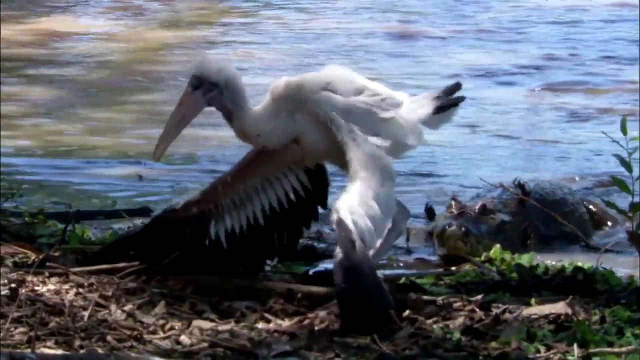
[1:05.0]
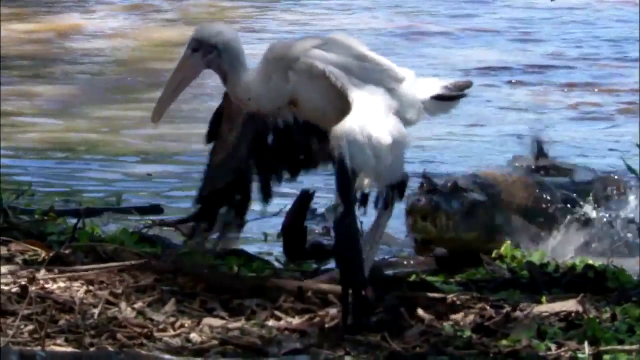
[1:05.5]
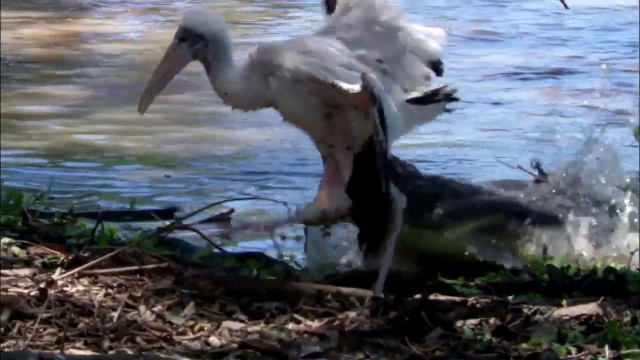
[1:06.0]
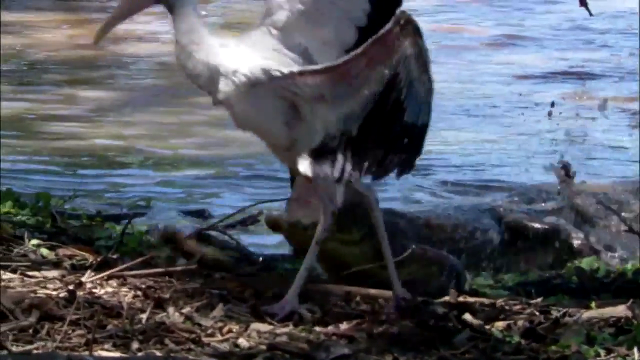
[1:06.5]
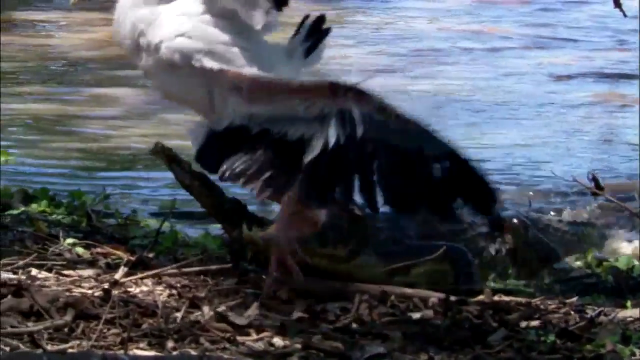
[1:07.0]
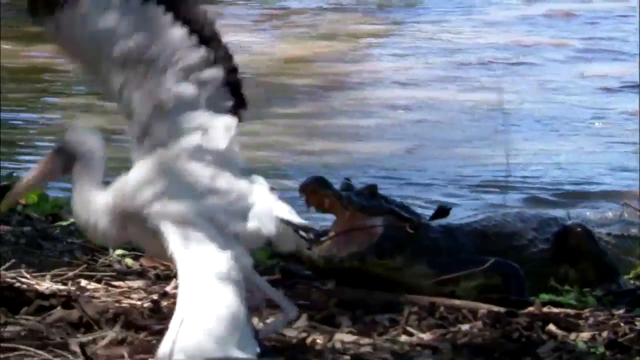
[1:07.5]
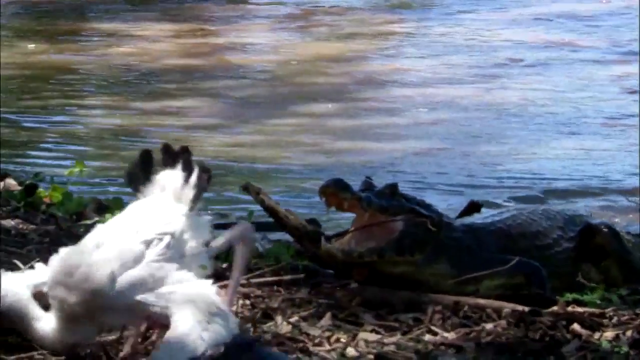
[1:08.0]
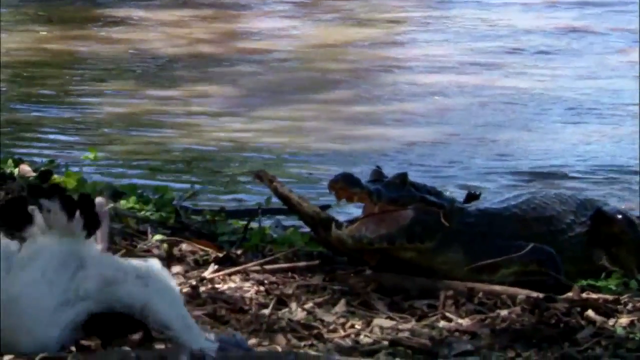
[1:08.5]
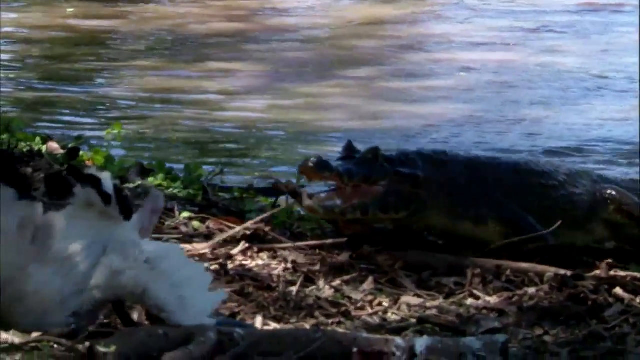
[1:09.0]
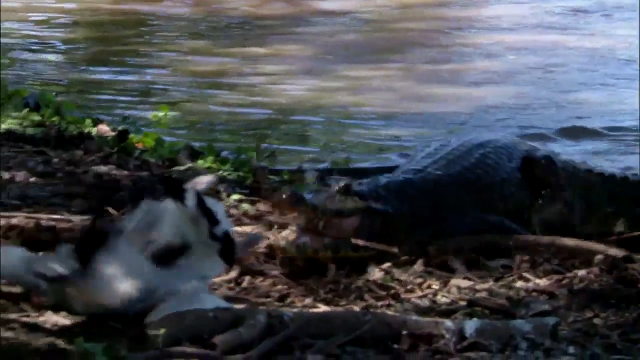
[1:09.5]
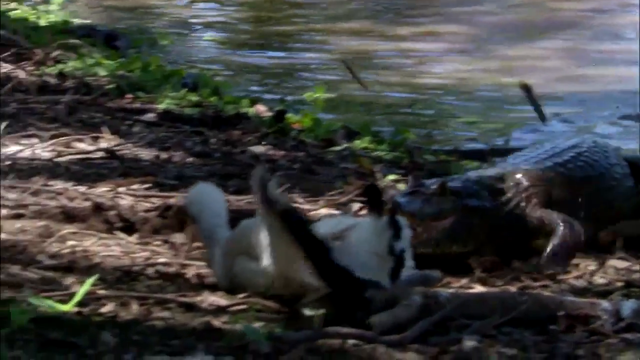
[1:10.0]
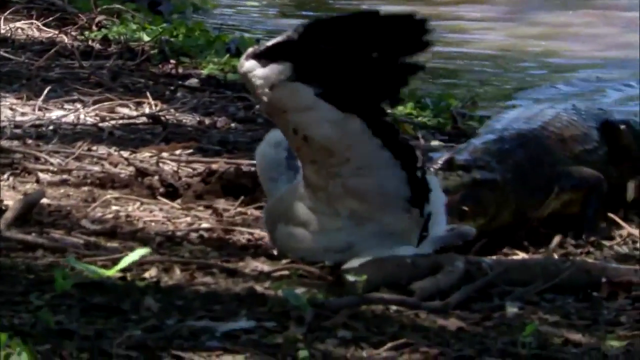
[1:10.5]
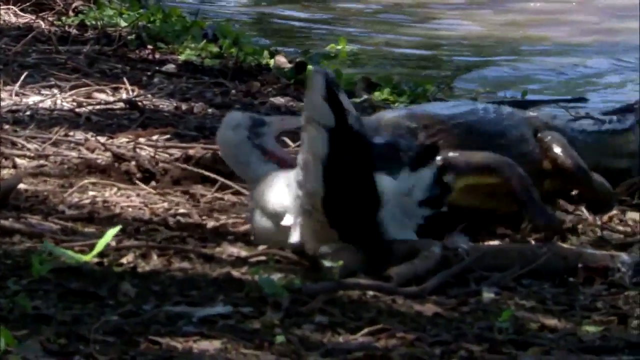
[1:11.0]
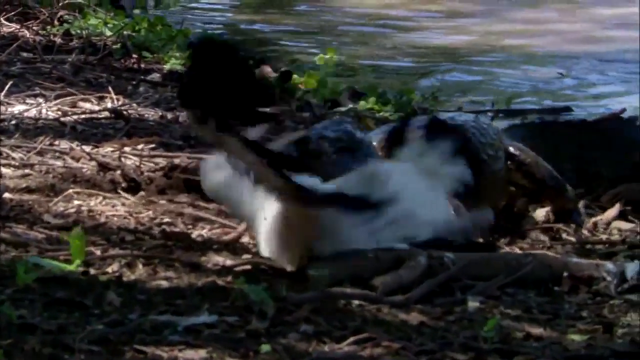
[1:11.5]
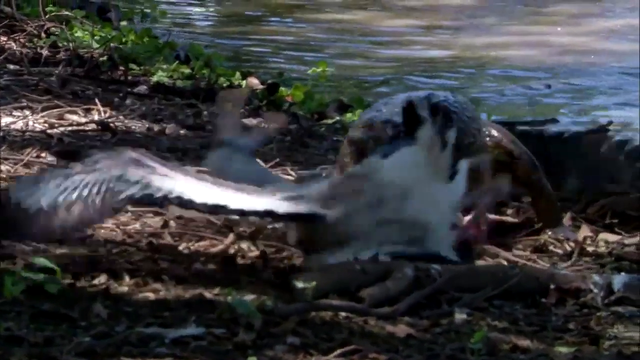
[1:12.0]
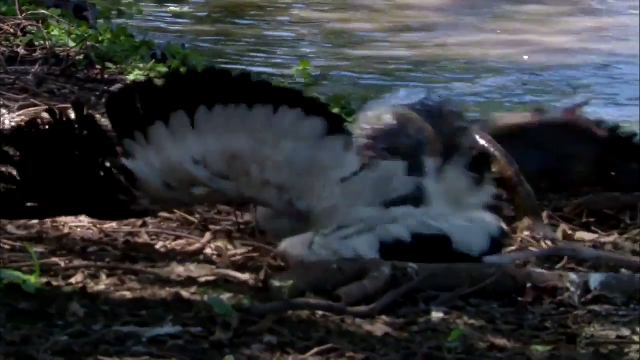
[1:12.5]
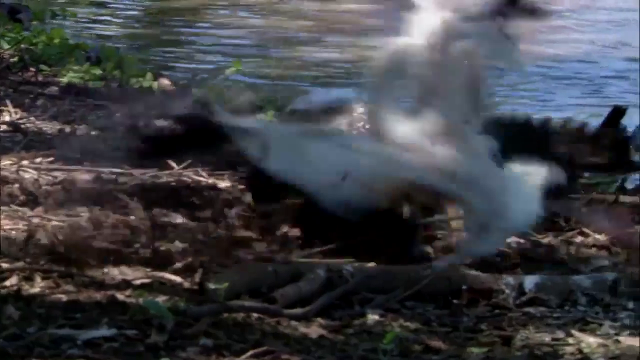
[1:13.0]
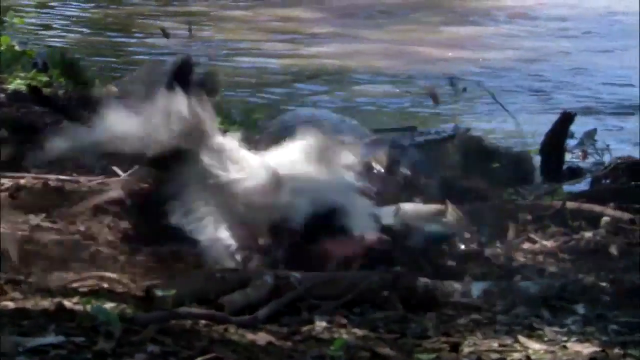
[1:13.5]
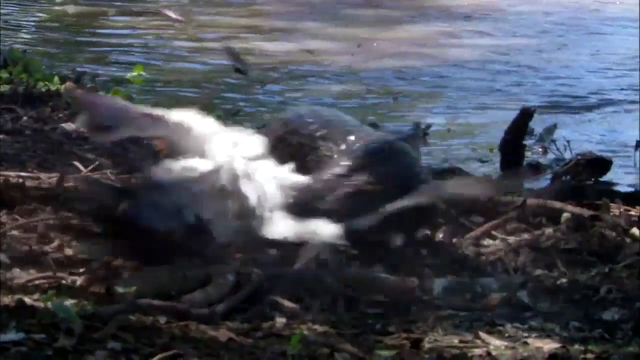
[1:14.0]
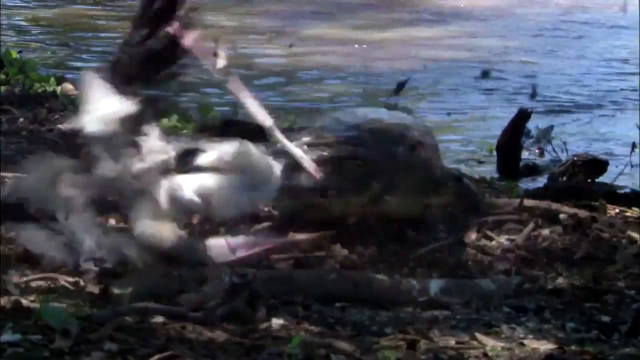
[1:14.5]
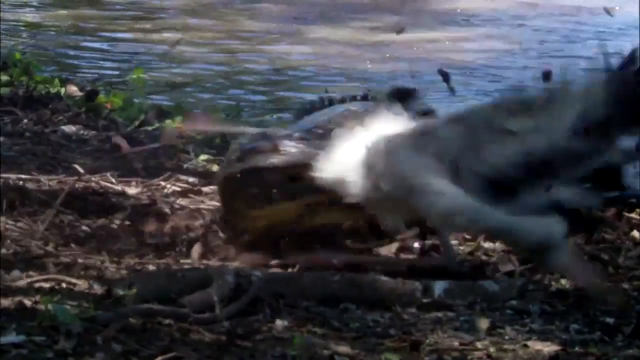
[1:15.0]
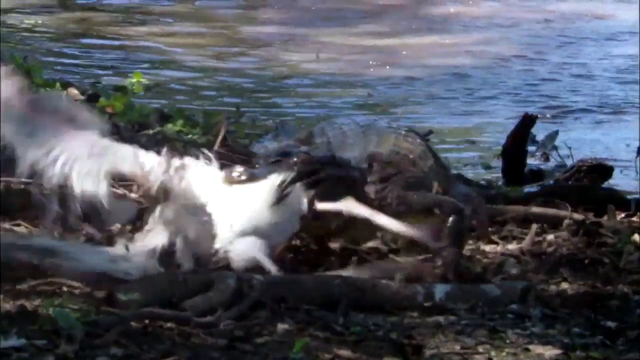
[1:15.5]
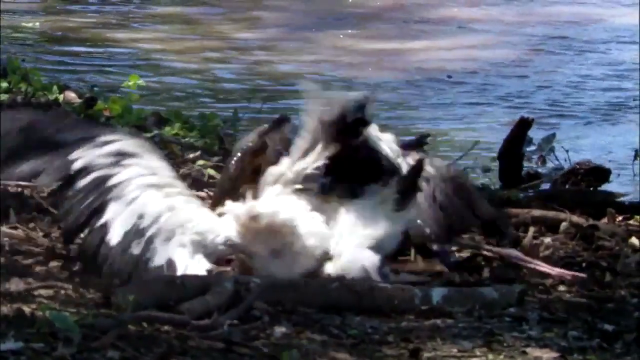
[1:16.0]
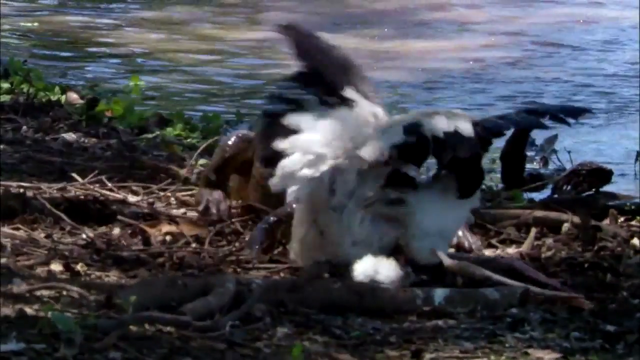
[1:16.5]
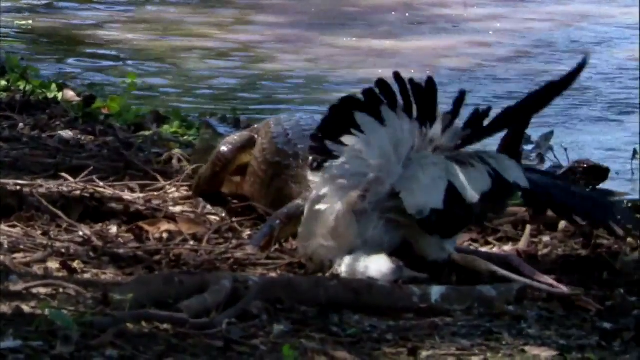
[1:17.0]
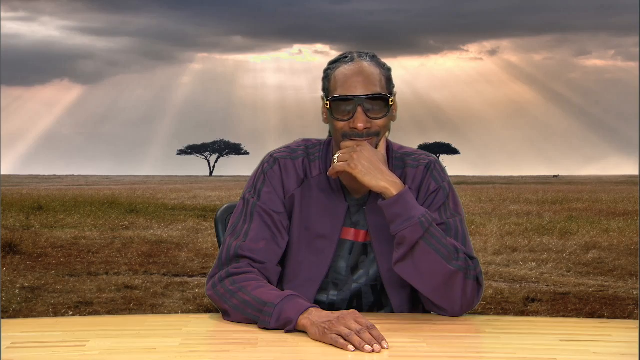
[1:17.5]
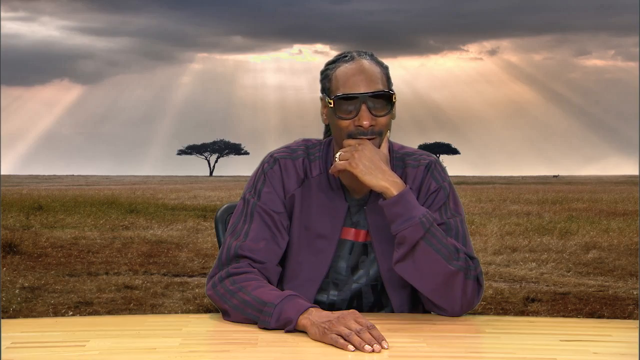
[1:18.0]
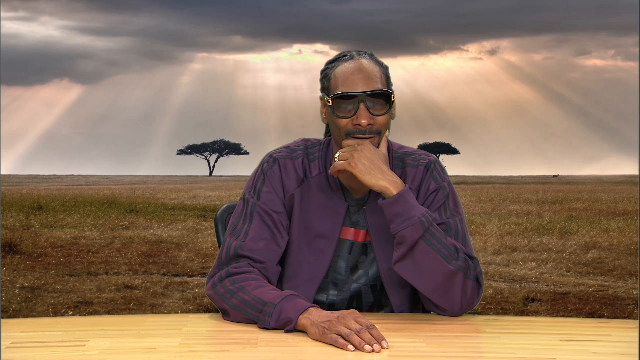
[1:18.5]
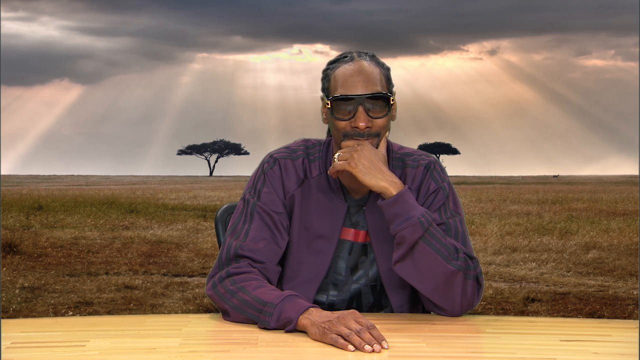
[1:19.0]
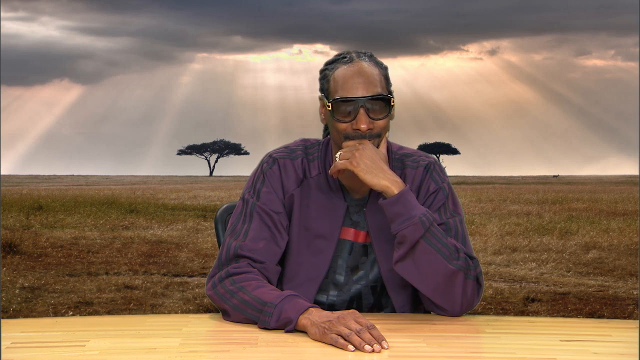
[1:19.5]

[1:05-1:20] Two birds are fighting each other. The crocodile catches and bites the birds, and a bird struggles. The crocodile takes a big bite on the bird's leg, and the bird falls down. The crocodile keeps attacking and biting, apparently holding the bird in its mouth. A person in the video shakes his hand and looks very sad.